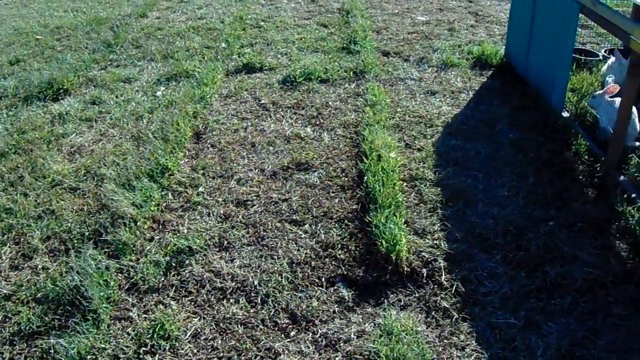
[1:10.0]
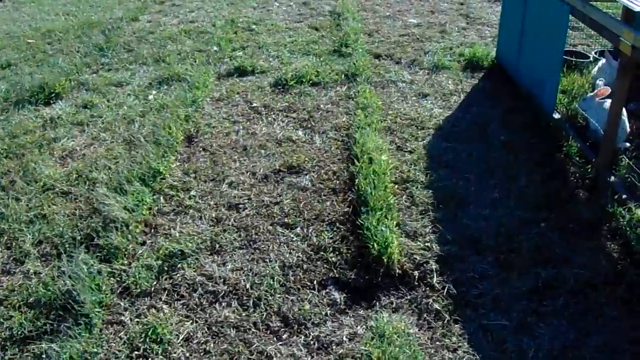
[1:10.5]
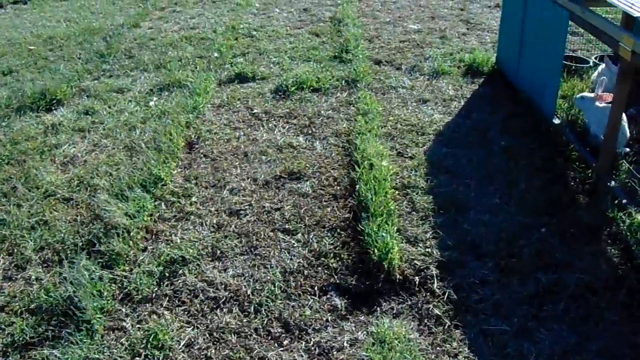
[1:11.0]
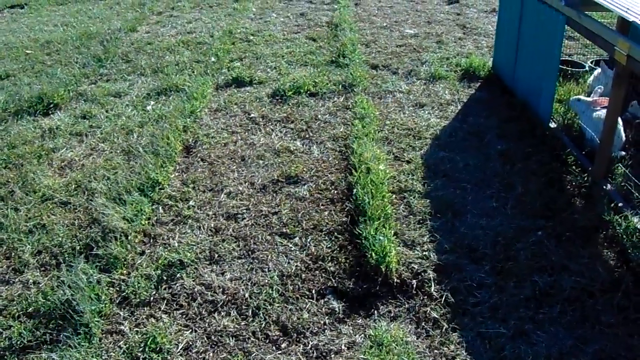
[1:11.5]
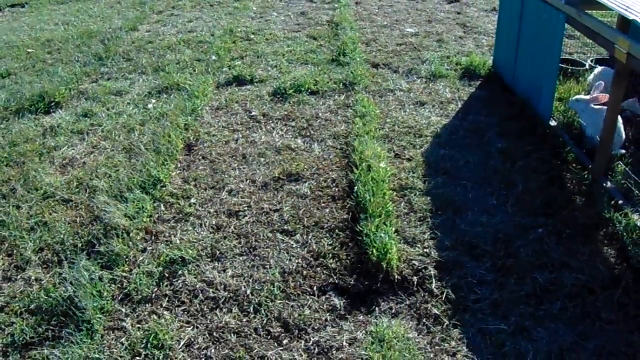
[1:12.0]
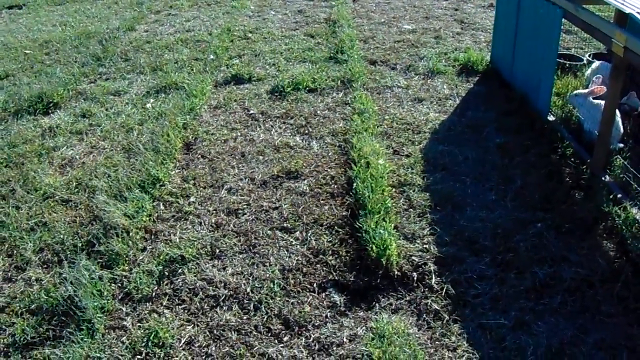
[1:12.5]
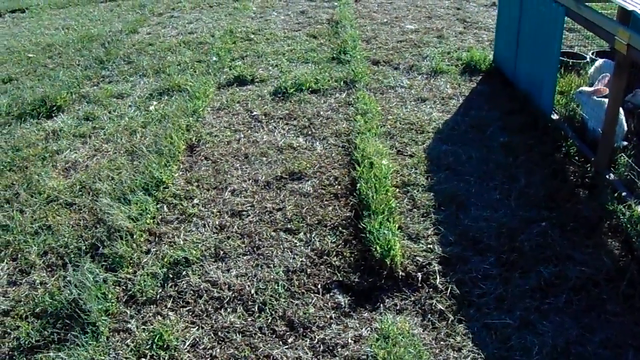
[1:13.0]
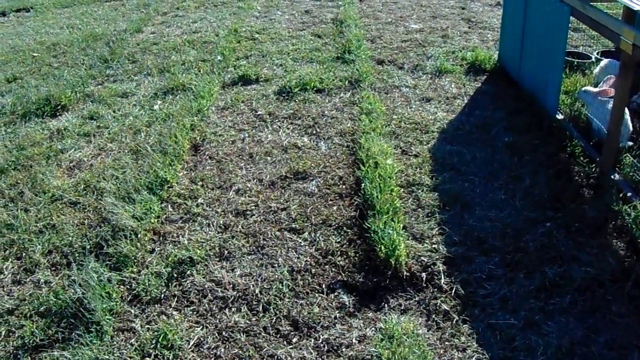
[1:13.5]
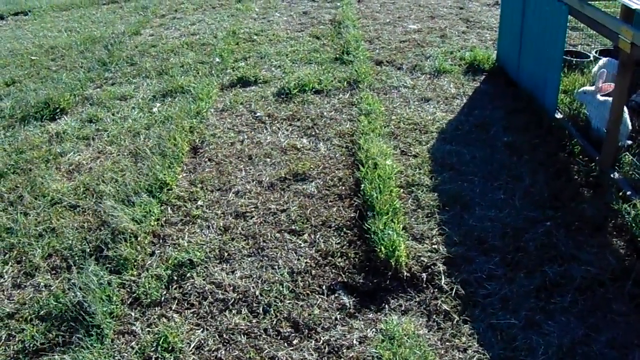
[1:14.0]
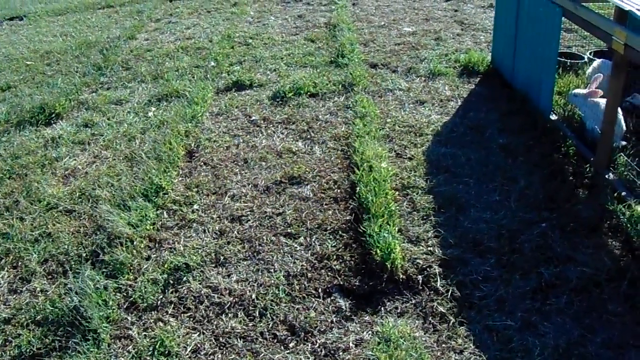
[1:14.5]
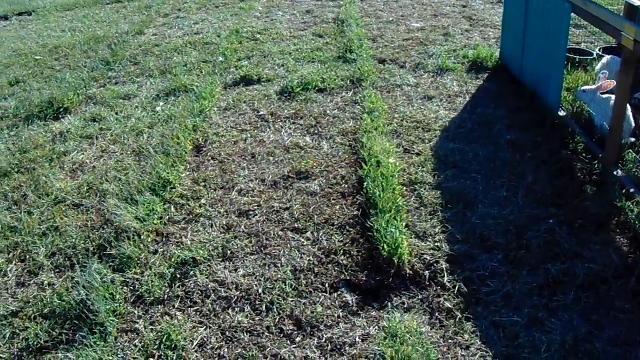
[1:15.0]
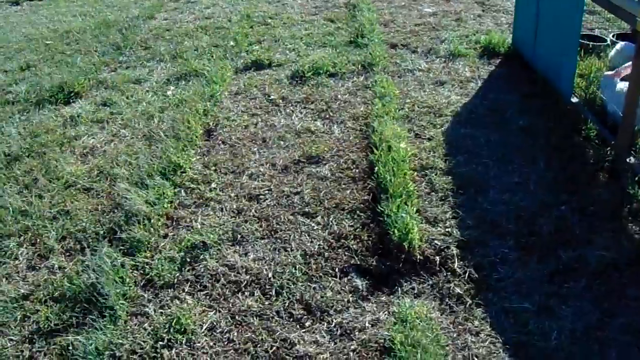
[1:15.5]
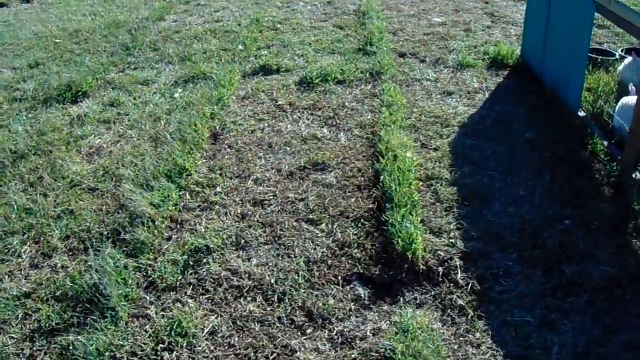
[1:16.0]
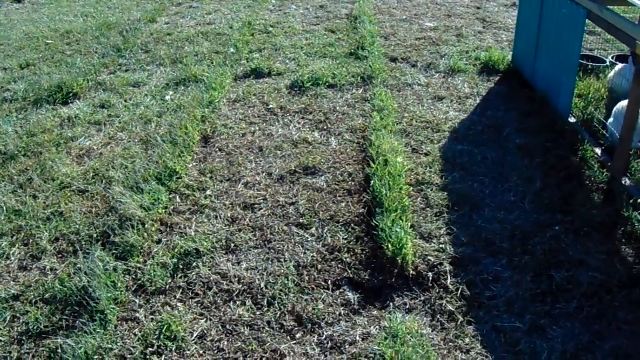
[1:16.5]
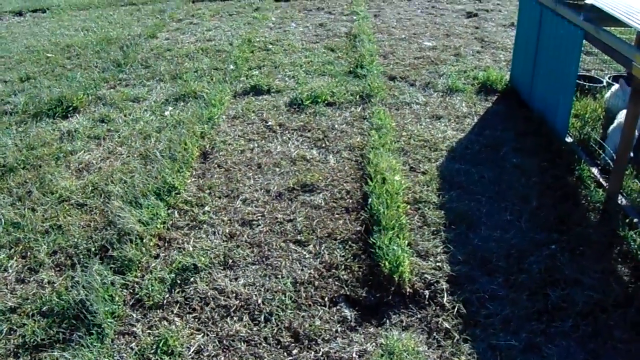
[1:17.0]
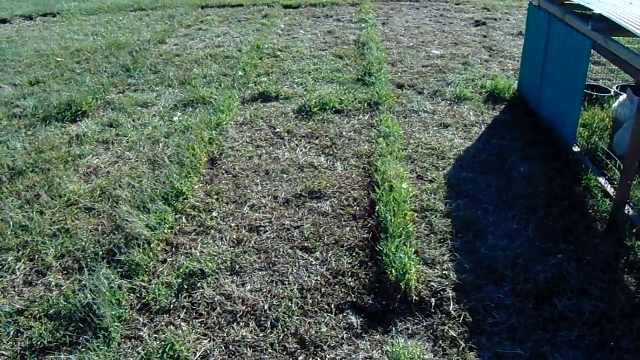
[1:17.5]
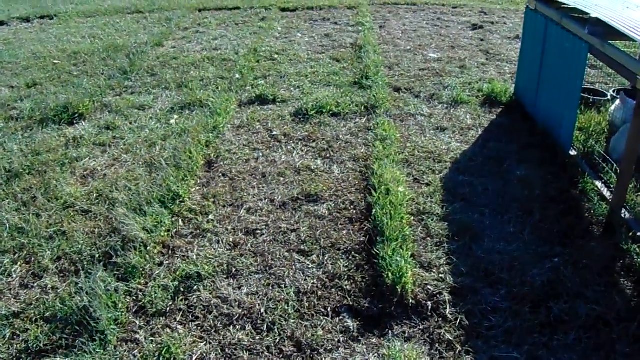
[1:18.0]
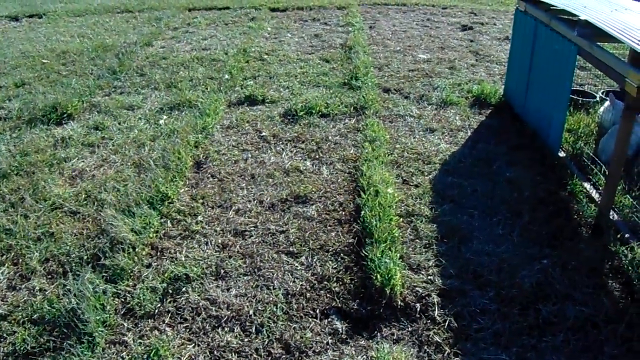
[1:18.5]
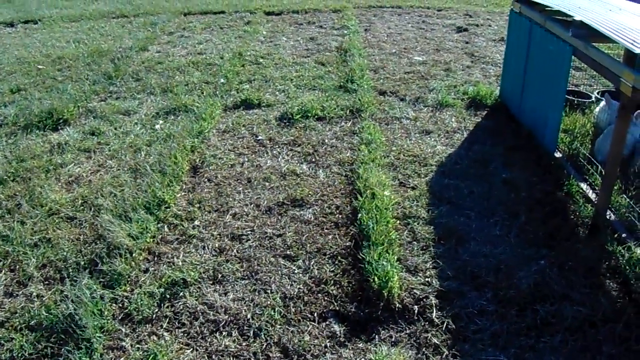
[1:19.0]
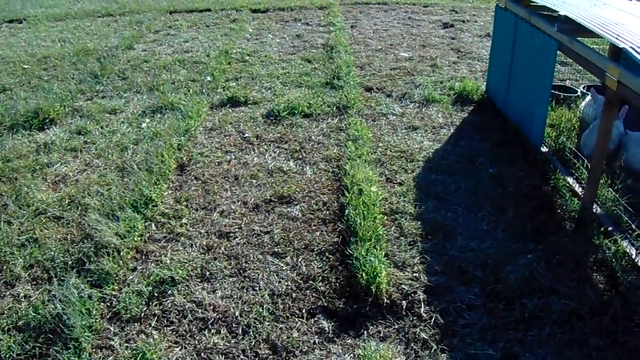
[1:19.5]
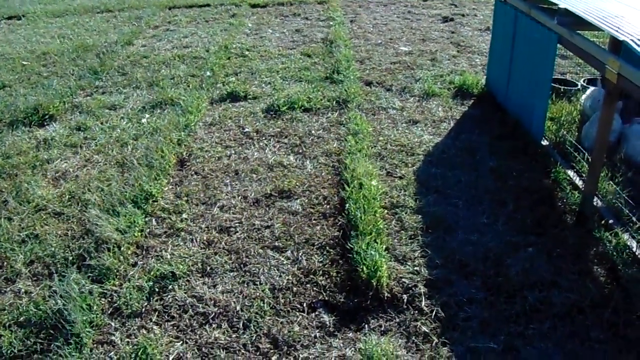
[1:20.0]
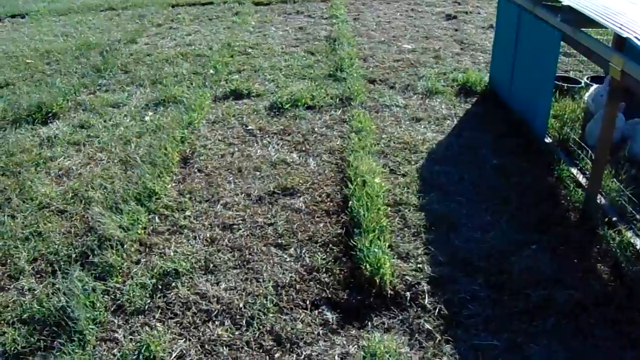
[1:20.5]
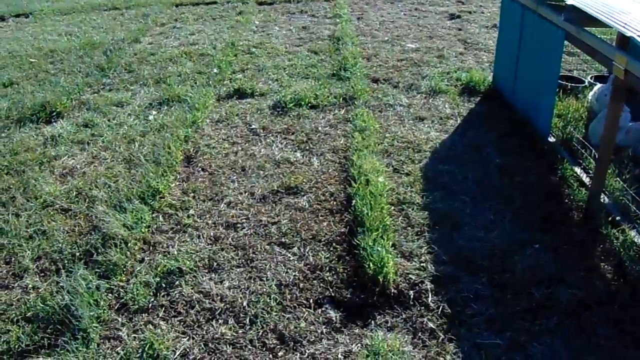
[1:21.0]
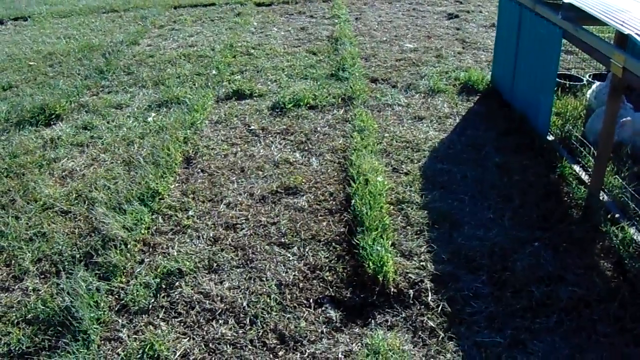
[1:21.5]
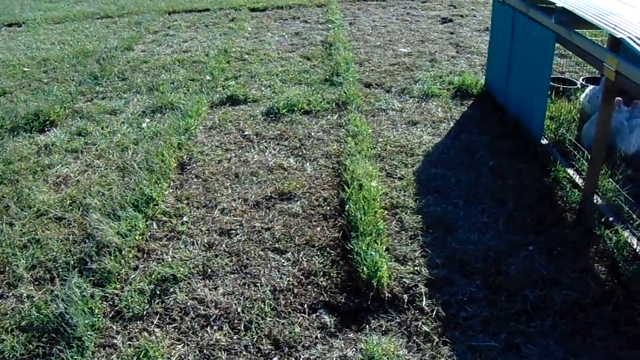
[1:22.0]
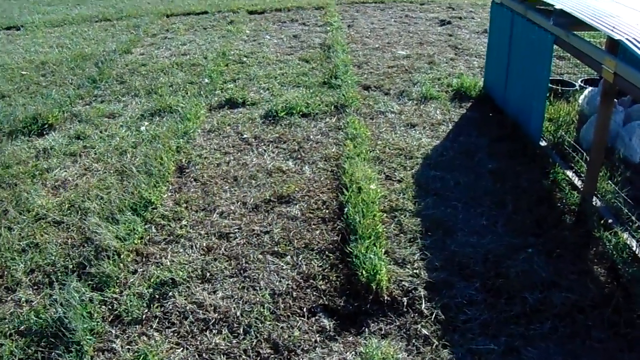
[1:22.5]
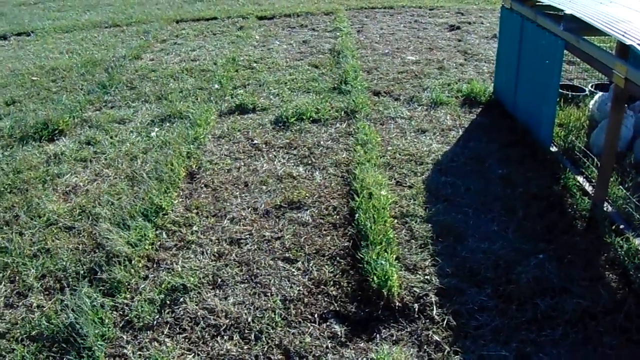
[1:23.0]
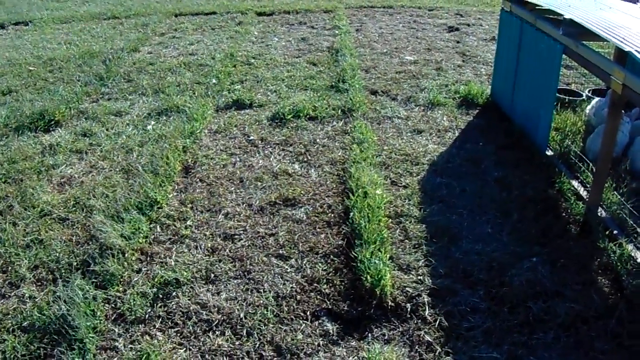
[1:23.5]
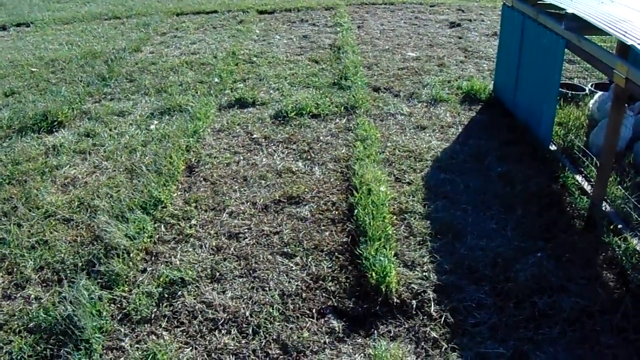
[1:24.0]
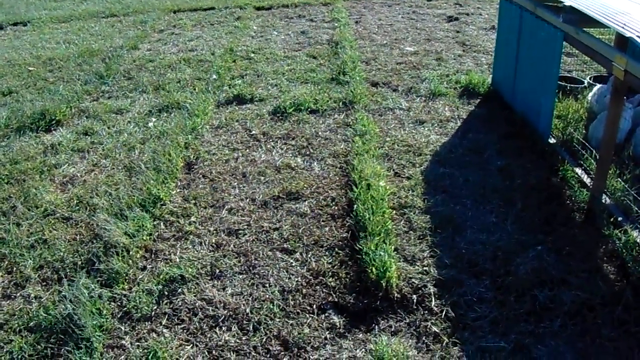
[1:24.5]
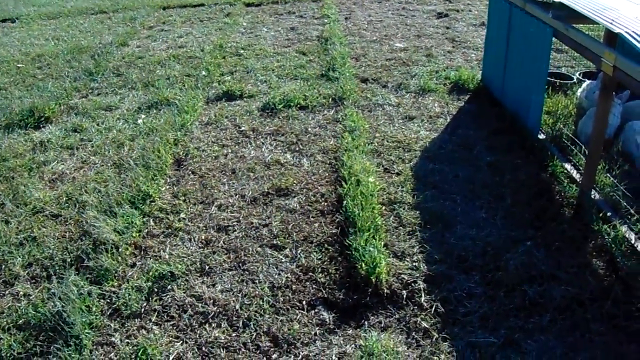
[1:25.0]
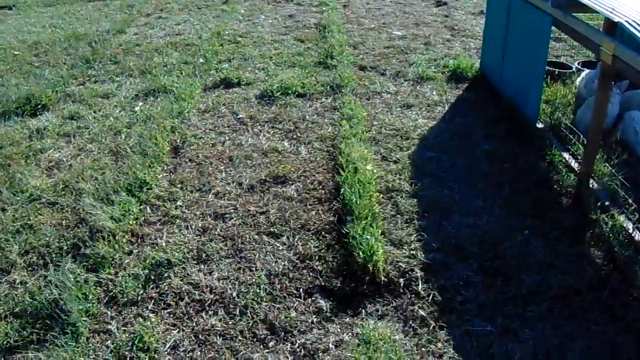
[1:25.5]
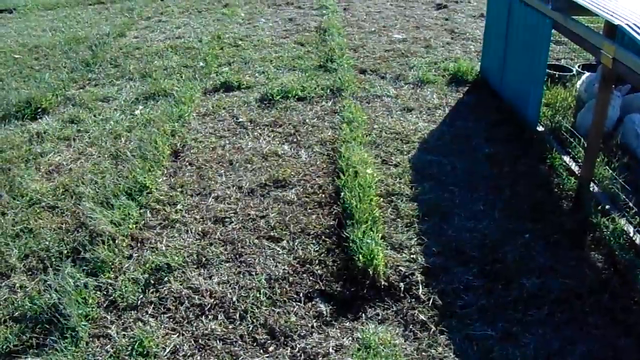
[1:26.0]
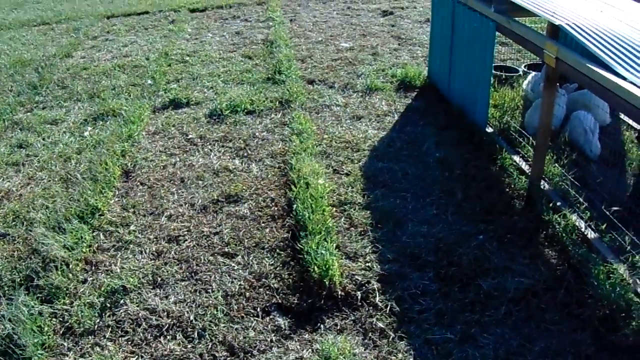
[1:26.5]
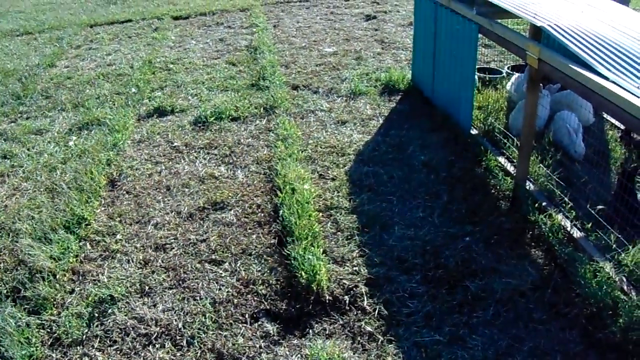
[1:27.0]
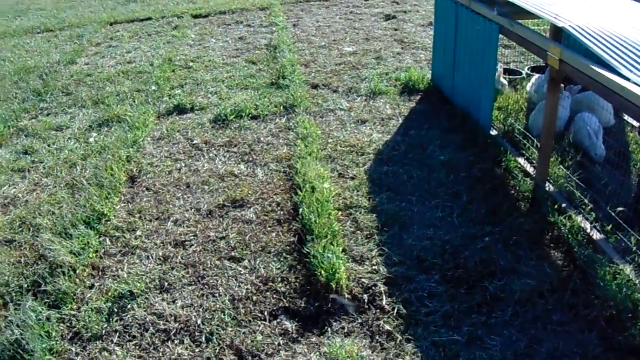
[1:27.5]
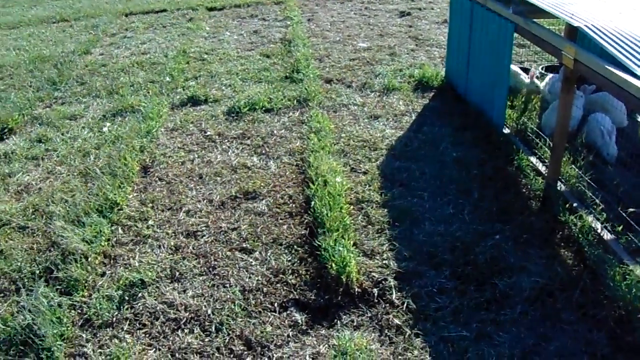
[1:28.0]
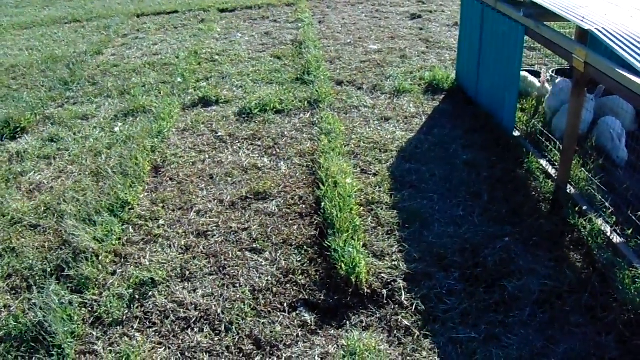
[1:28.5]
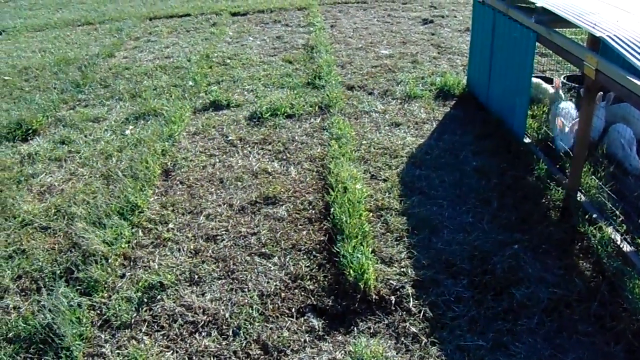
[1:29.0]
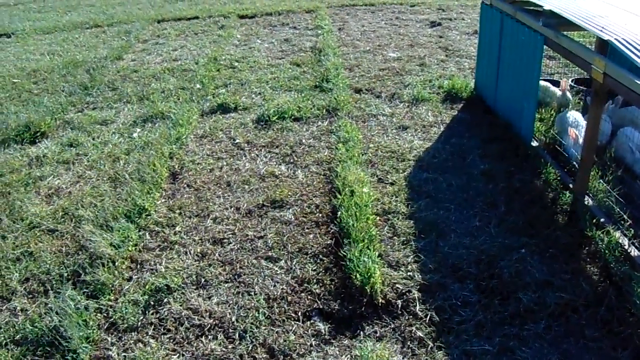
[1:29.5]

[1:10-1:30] A piece of land shows bright green strands of grass positioned so that they draw rectangles on the ground. In the top right corner of the frame, part of a structure is visible, with small white rabbits inside moving close to each other and jumping on the grass. The structure is formed by very thin wooden beams that intersect perpendicularly, with small rectangular golden panels at the intersection points, and at one end of the cage there are rather large dark panels, probably of iron. The structure casts a very dark shadow on the ground in the right part of the frame. The footage is not stable and the camera moves throughout.